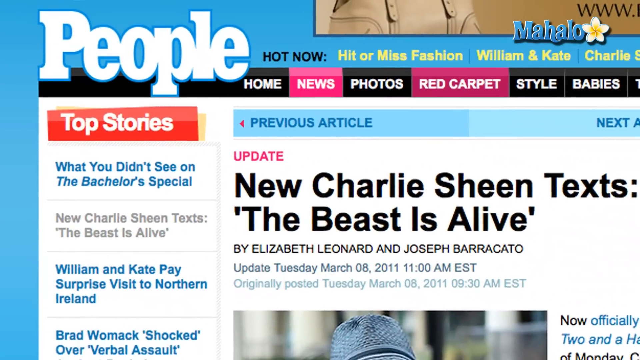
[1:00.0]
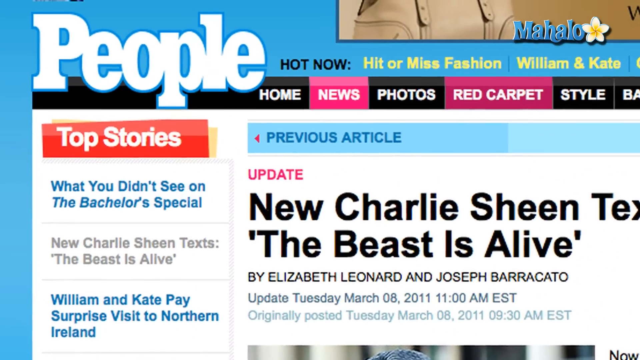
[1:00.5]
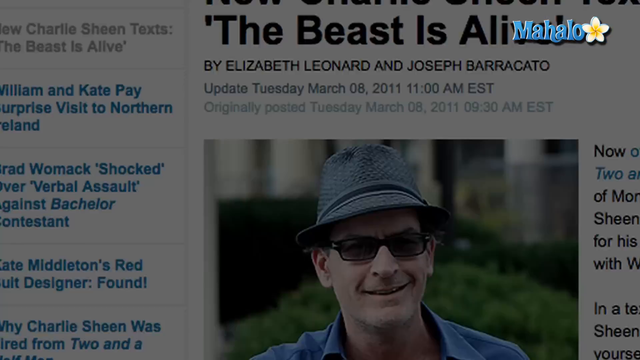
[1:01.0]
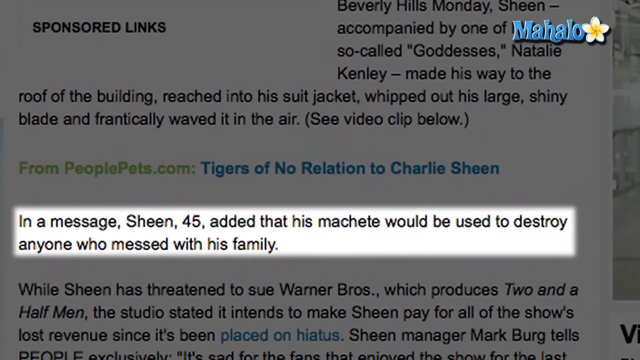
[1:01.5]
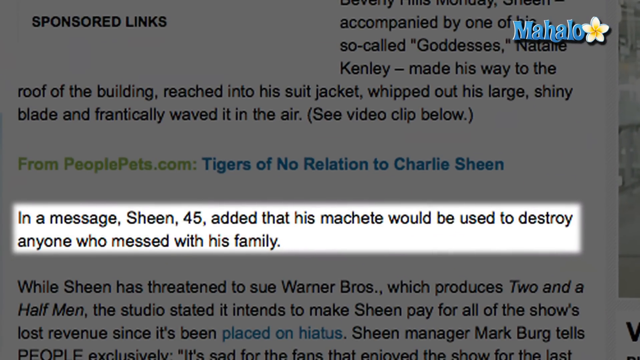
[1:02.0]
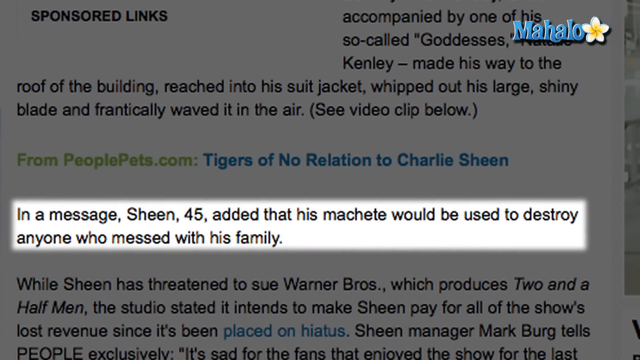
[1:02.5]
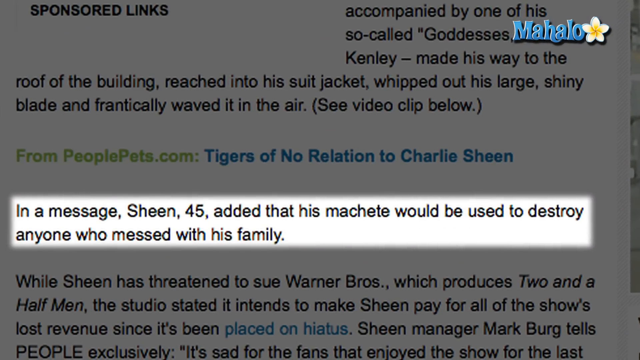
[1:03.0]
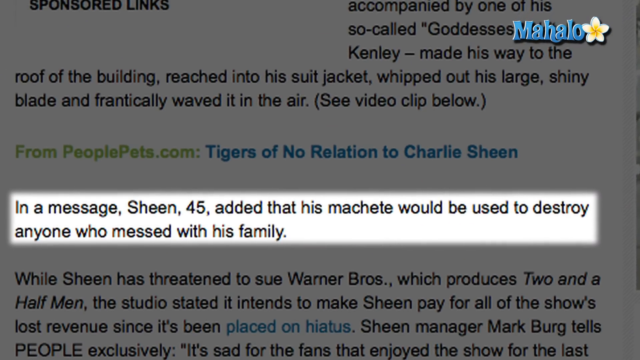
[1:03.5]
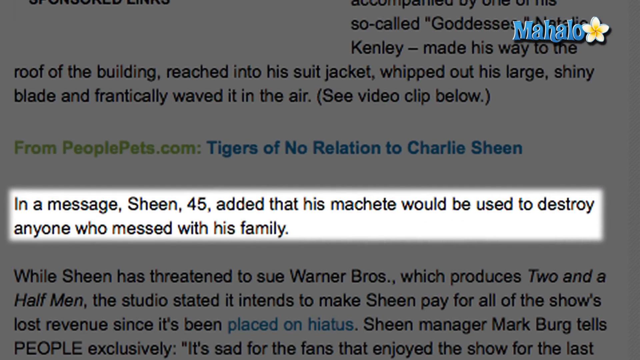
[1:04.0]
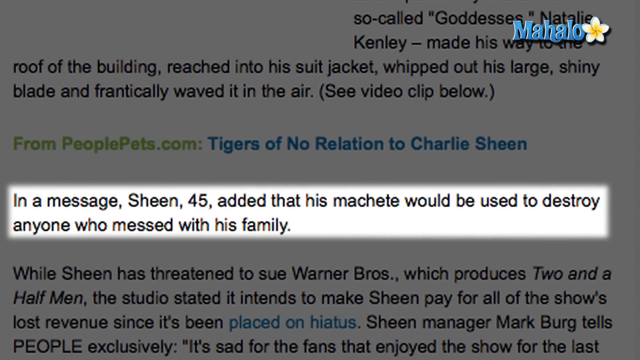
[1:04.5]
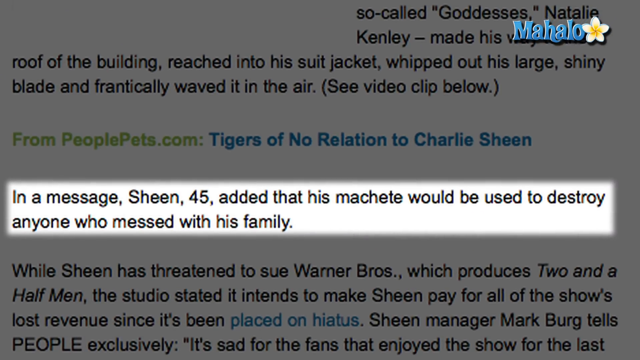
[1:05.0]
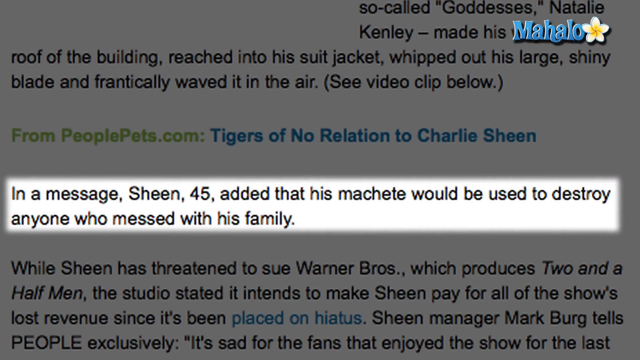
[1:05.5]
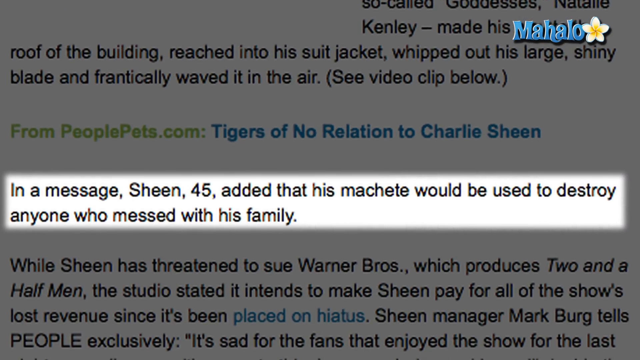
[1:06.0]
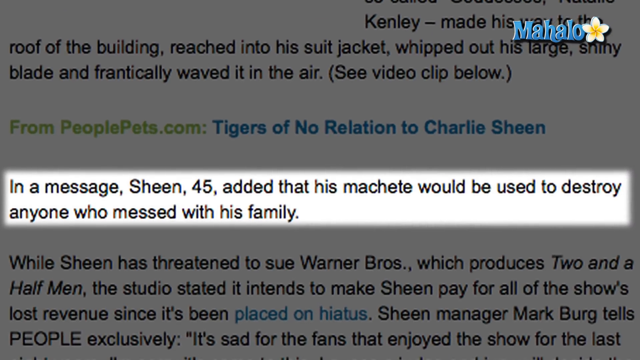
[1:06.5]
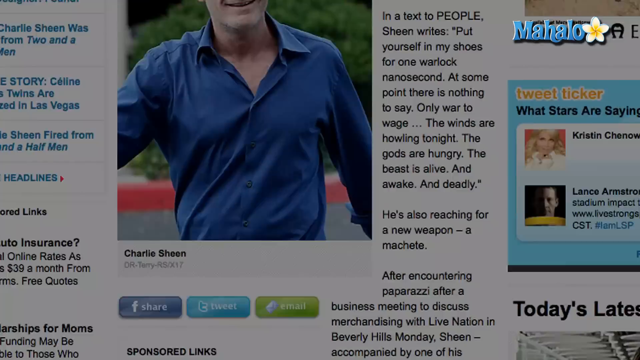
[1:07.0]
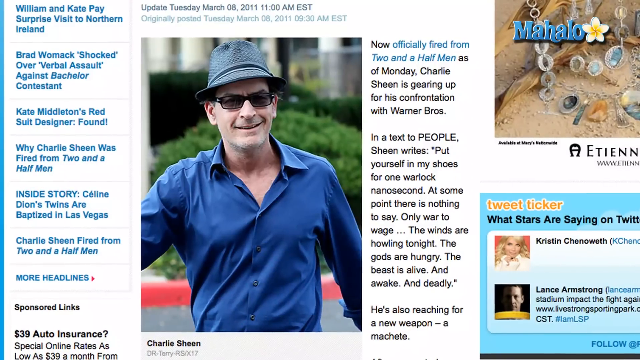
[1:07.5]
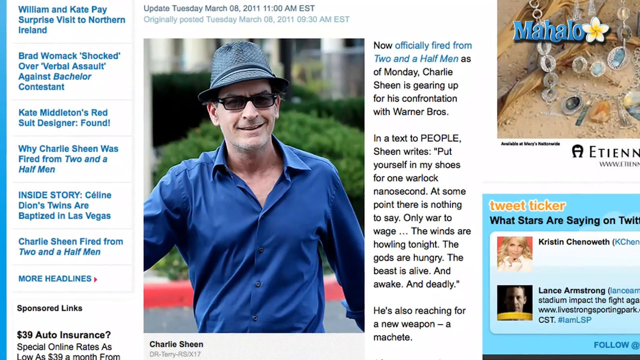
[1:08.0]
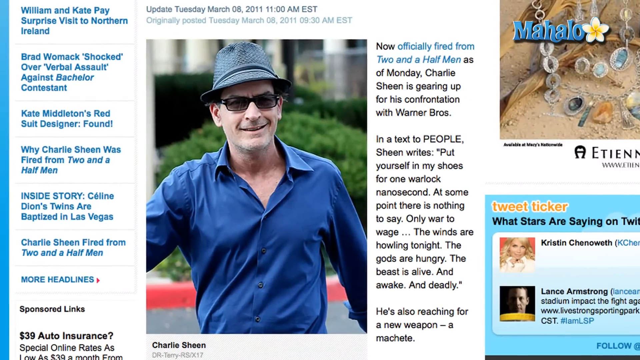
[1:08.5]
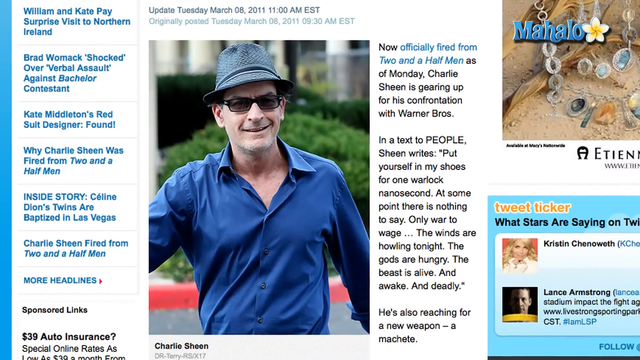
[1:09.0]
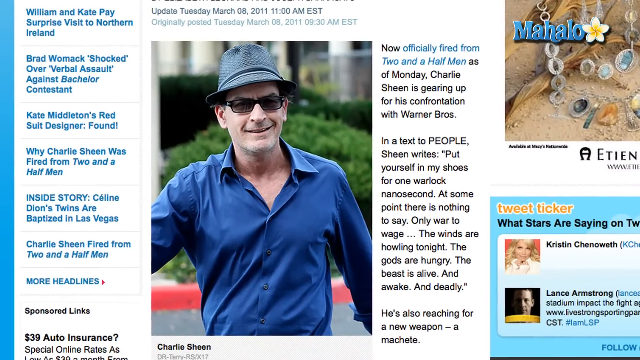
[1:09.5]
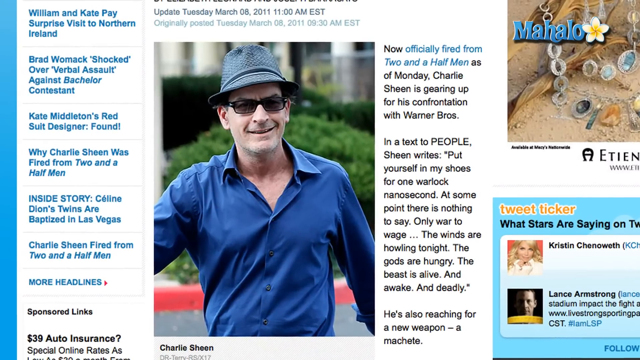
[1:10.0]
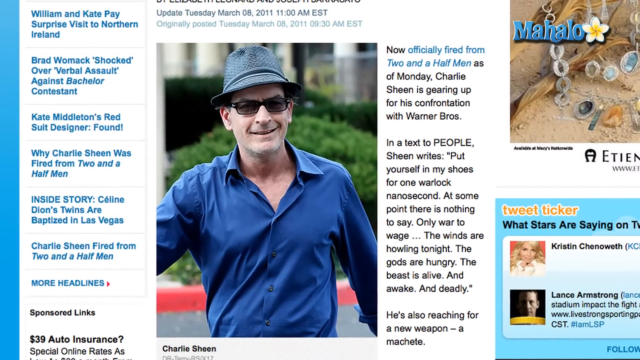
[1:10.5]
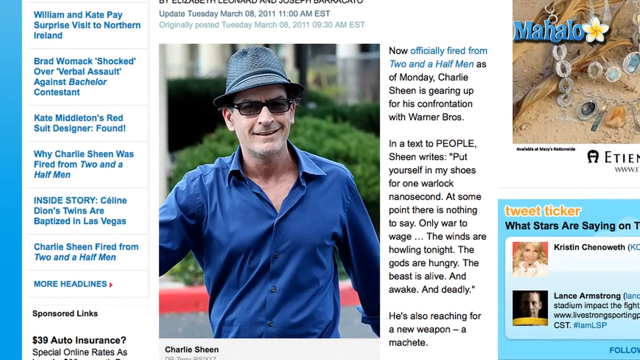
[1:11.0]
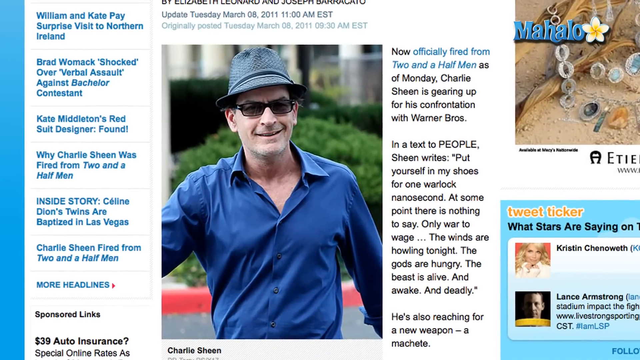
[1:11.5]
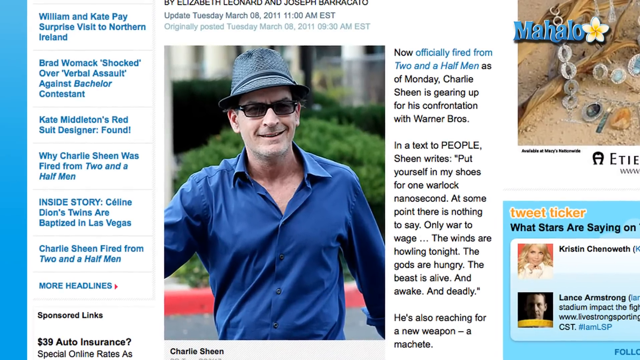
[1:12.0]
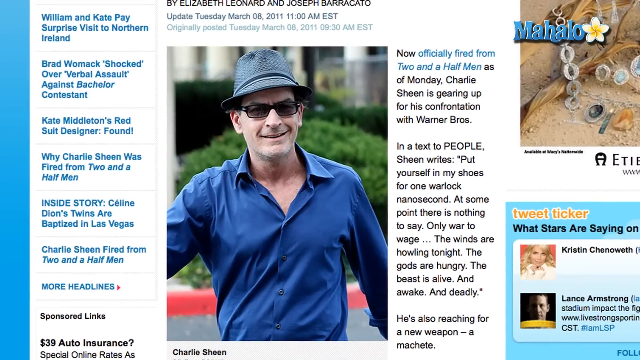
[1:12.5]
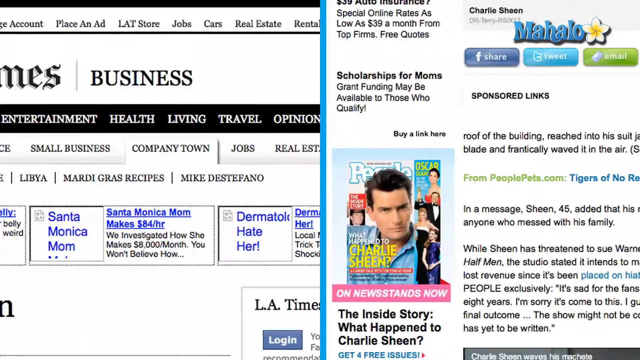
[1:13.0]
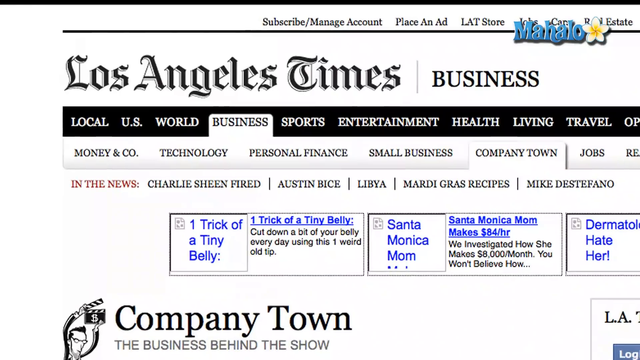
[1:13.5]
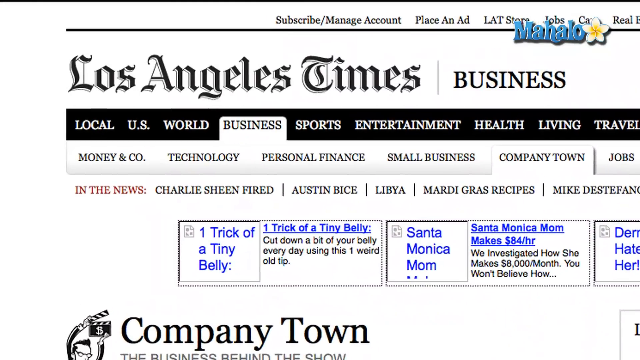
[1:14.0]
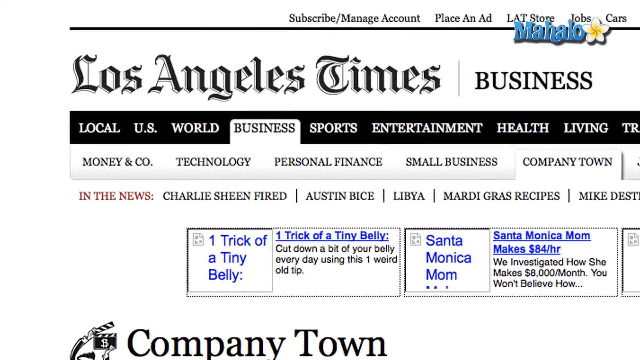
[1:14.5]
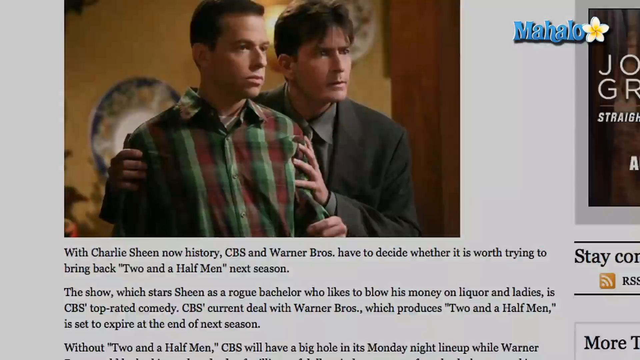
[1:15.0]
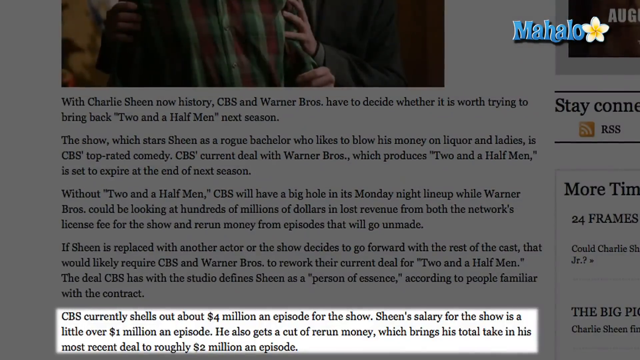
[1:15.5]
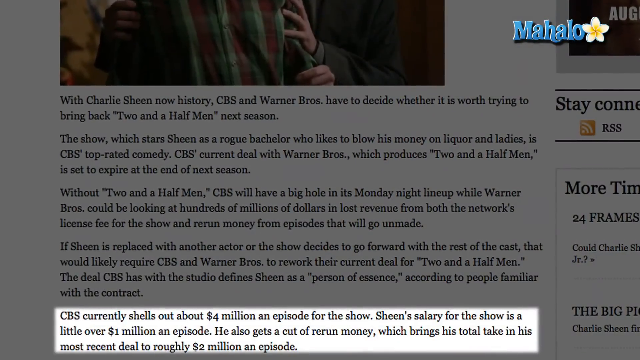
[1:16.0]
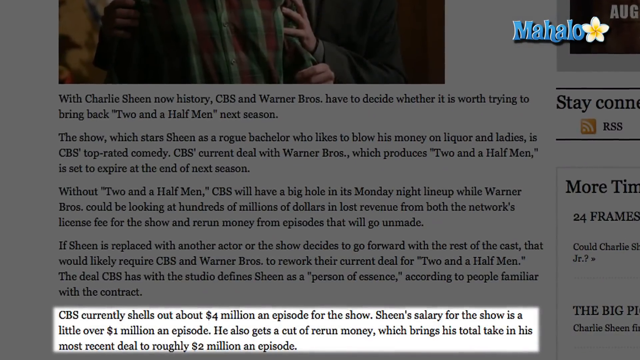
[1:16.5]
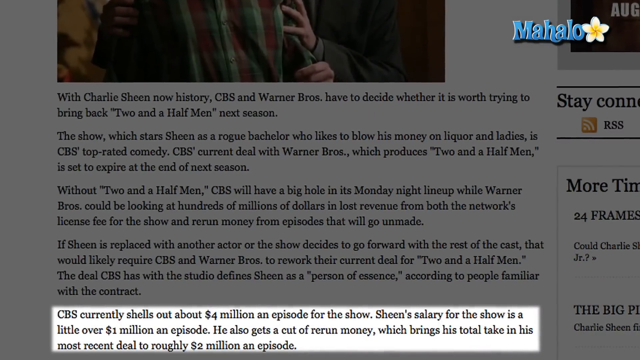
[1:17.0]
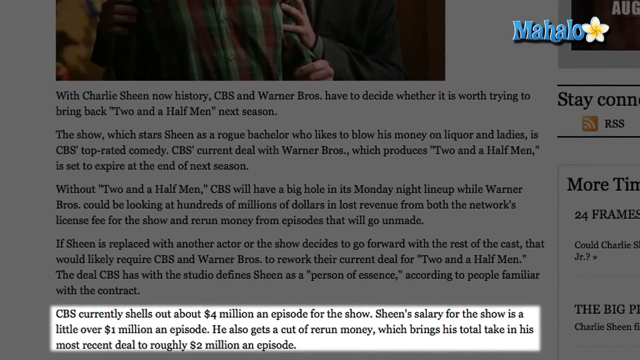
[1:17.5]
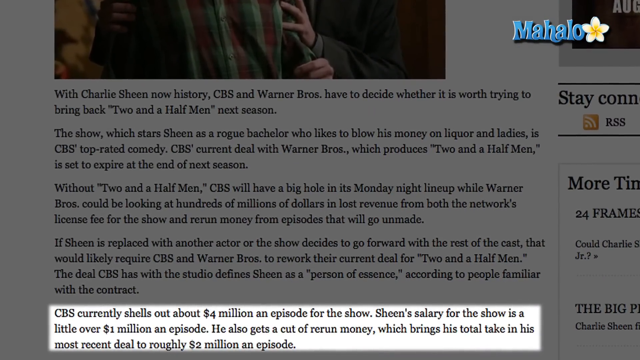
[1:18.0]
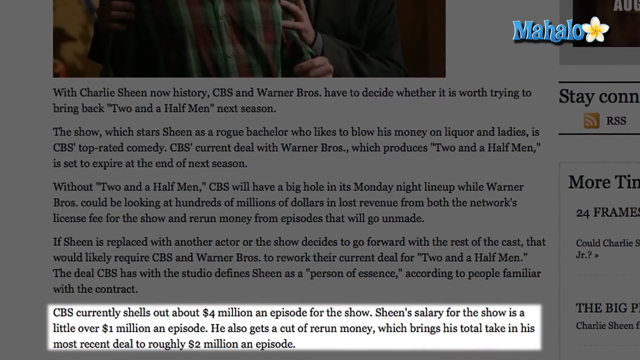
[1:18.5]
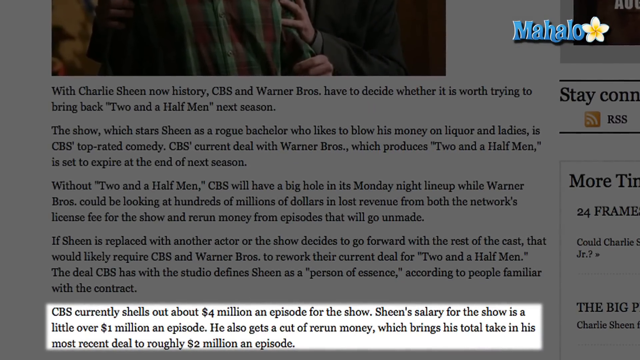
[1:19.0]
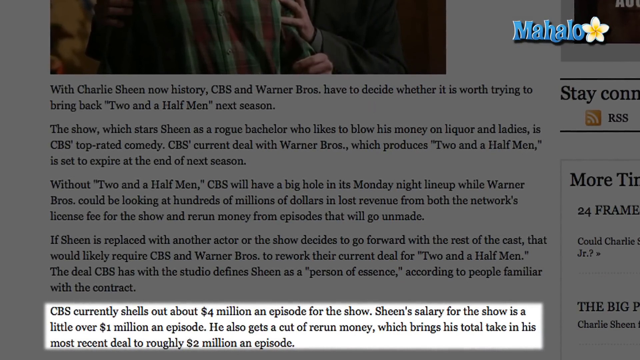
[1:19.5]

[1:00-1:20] The report covers a message in which Charlie Sheen says his machete would be used against anyone who messes with his family, and a text to People about waging war as he gears up for a confrontation with Warner Brothers.